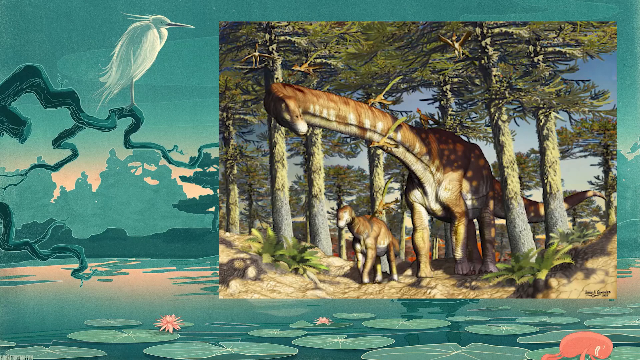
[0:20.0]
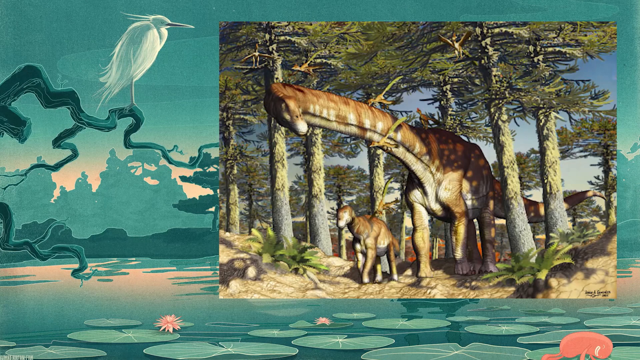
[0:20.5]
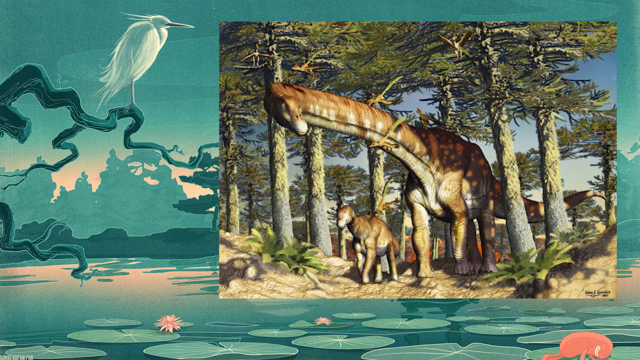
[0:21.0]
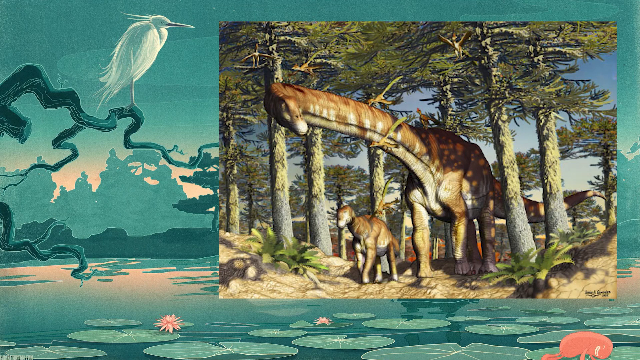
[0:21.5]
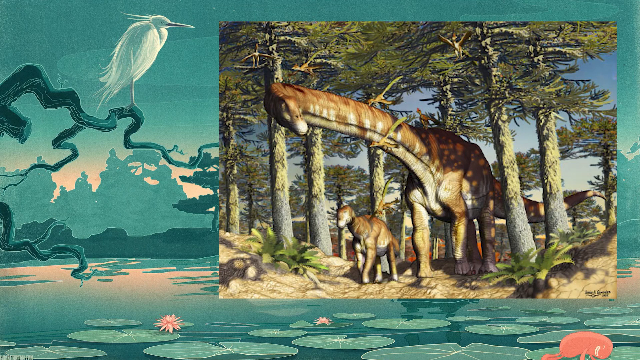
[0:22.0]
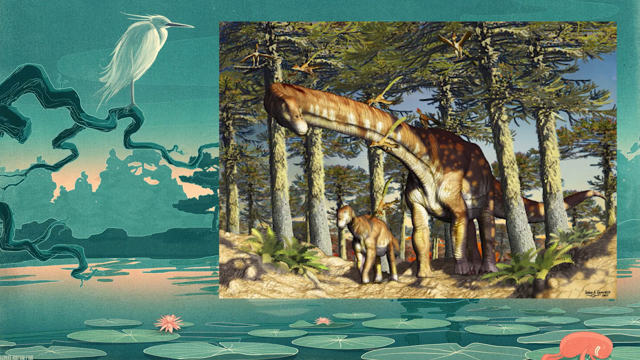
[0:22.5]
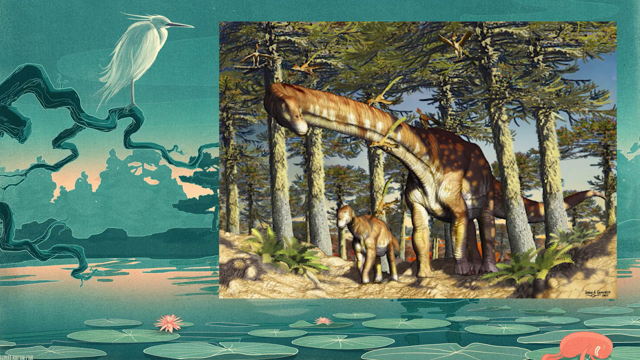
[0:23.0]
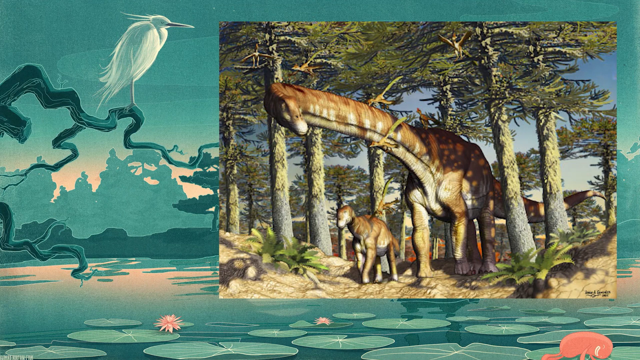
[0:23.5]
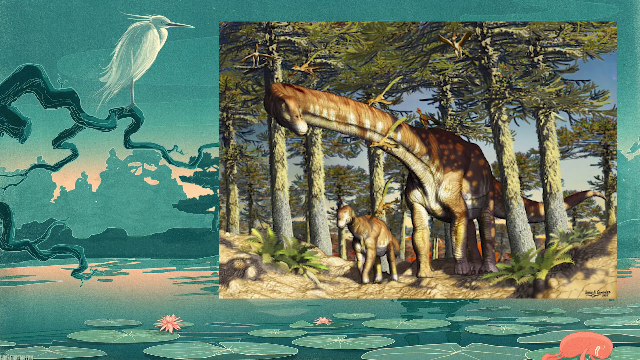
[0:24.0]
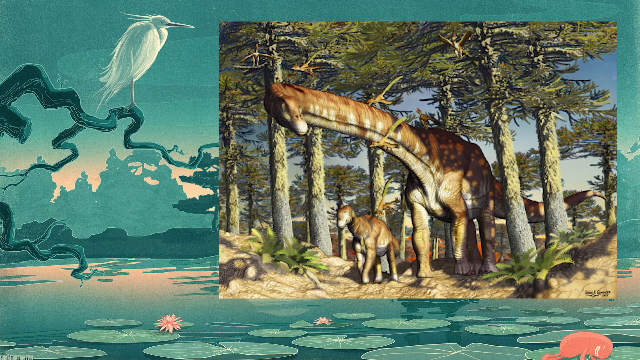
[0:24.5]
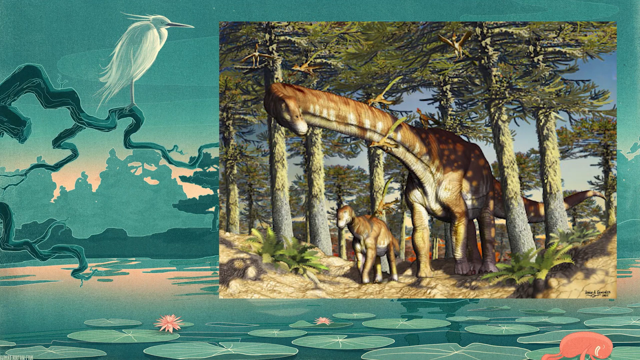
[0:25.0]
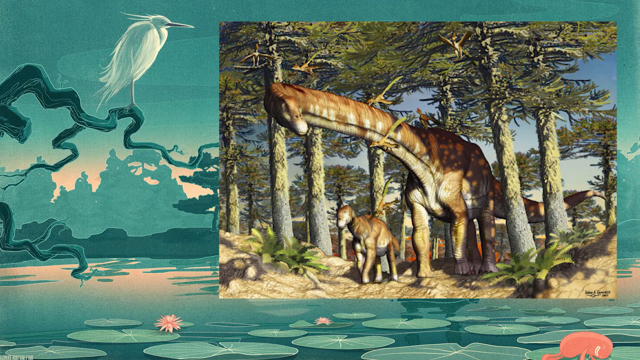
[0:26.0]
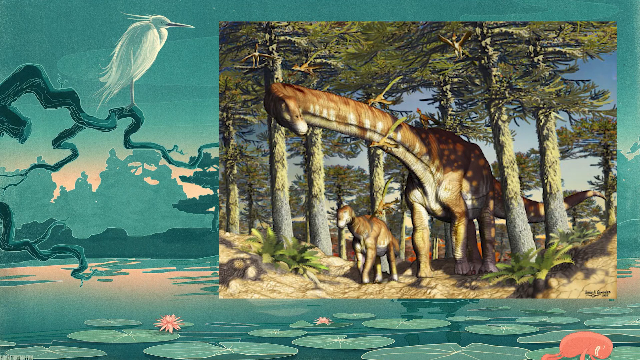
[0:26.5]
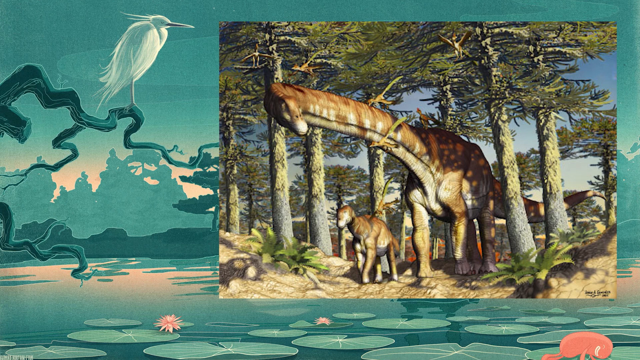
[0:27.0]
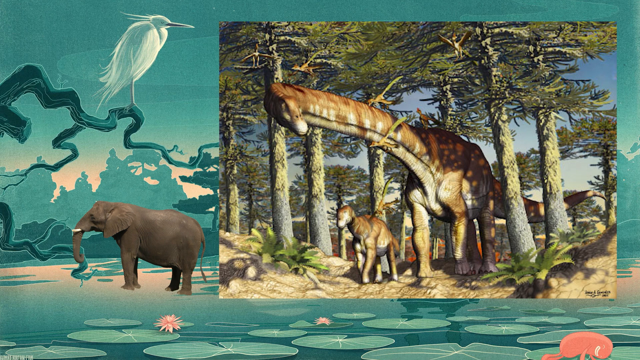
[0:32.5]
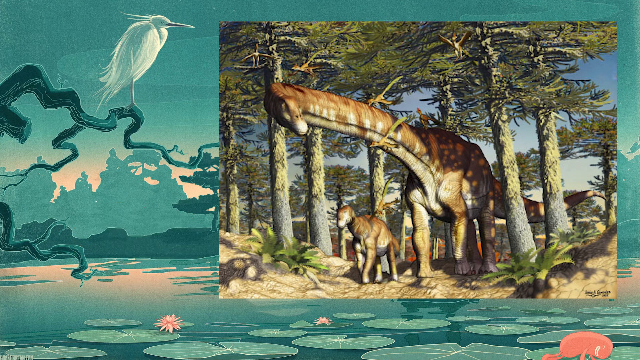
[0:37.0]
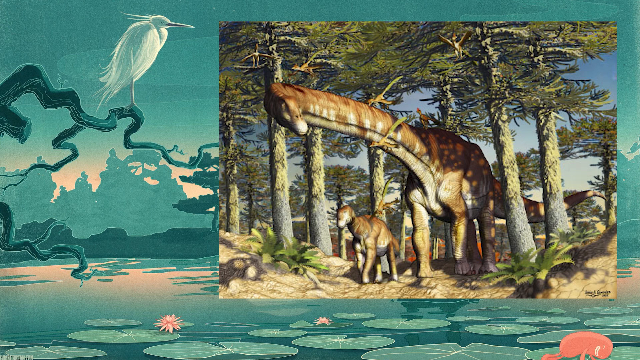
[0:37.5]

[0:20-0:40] The same background appears, with the Japanese building in the distance and Japanese trees around it, taken from the perspective of almost a lily pad on the lake in the foreground. On the left side there is a bird perched on a tree branch. An image is overlaid on top of the background showing a couple of dinosaurs walking through the woods: a Brontosaurus and a little baby dinosaur to the right of it, walking through a forest with about six or eight trees in the picture. For a couple of seconds, an image of an elephant appears on the left side, underneath the bird perched on the tree branch.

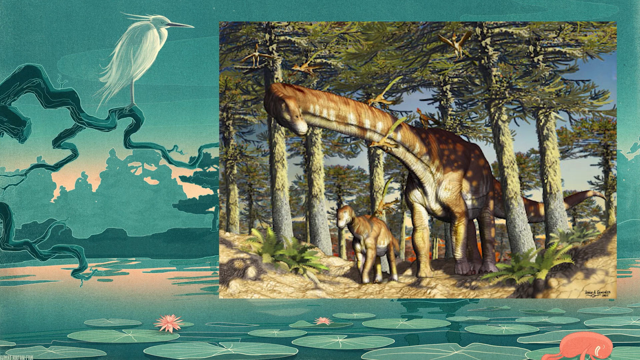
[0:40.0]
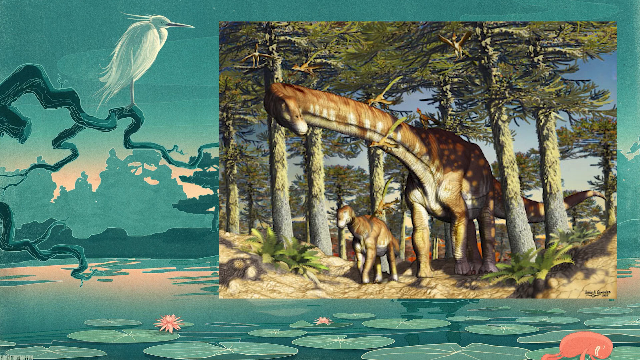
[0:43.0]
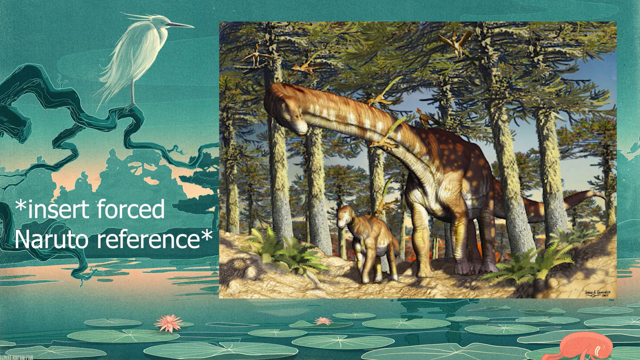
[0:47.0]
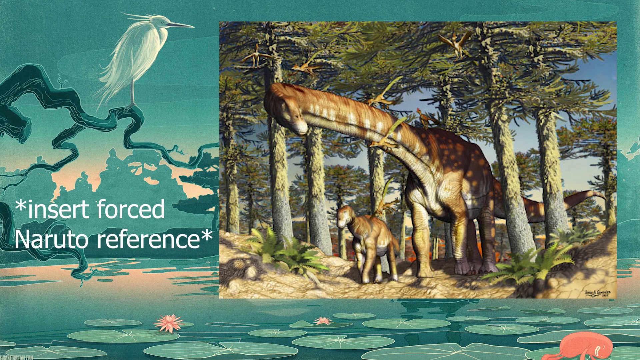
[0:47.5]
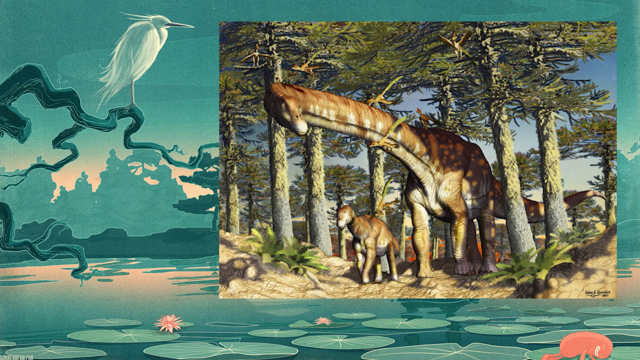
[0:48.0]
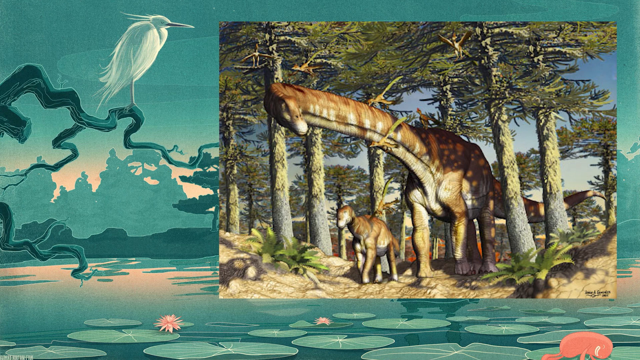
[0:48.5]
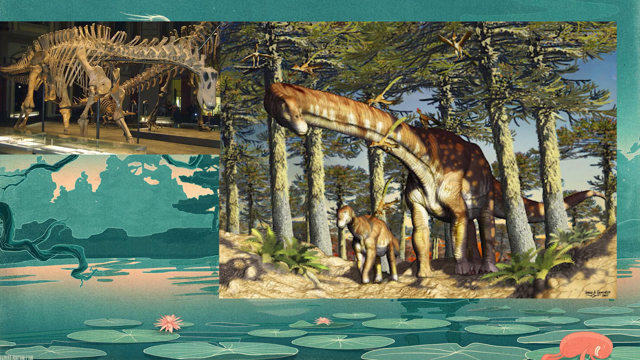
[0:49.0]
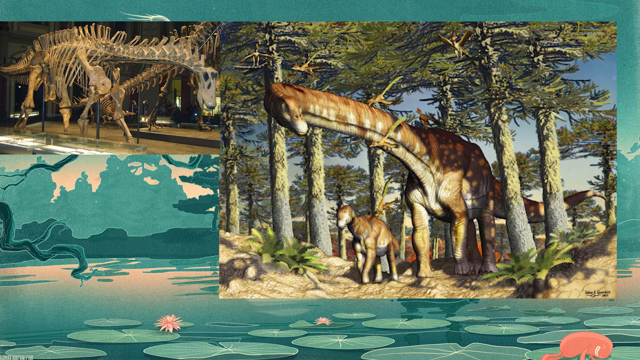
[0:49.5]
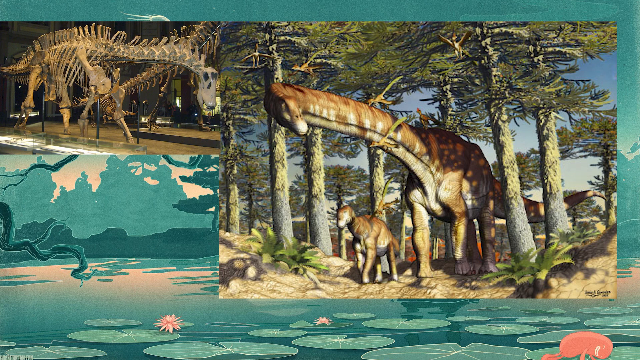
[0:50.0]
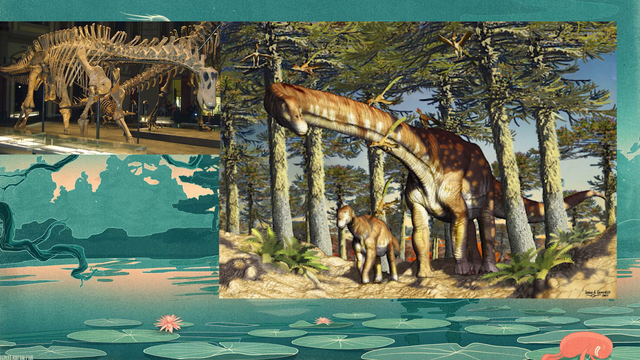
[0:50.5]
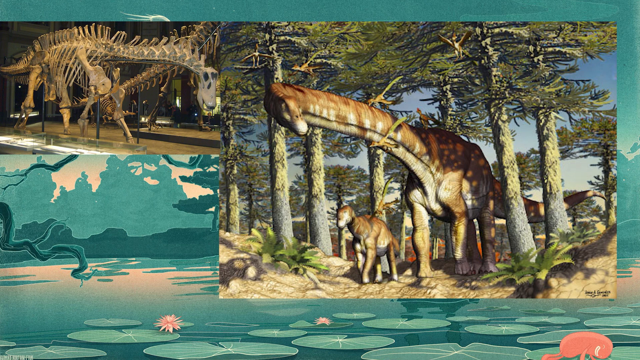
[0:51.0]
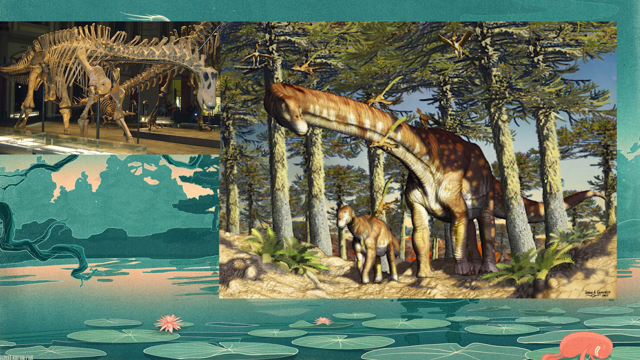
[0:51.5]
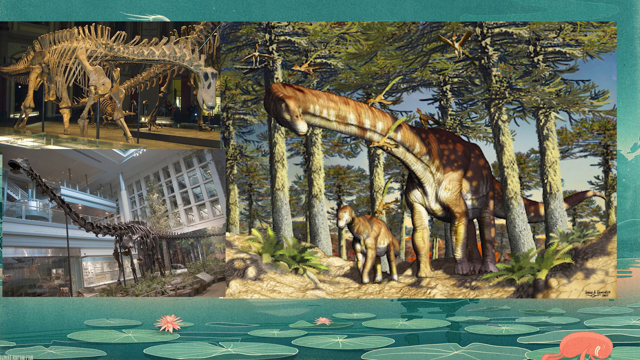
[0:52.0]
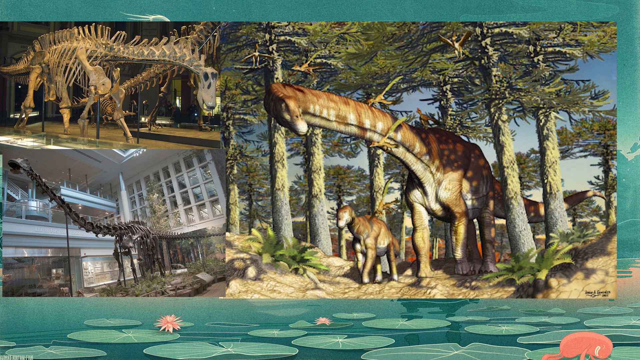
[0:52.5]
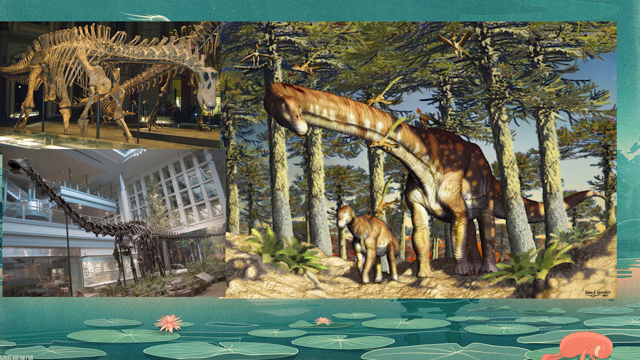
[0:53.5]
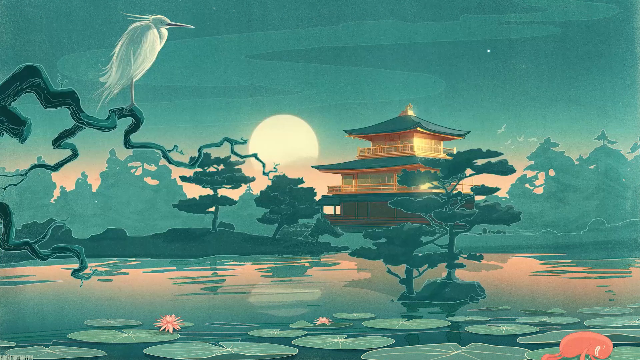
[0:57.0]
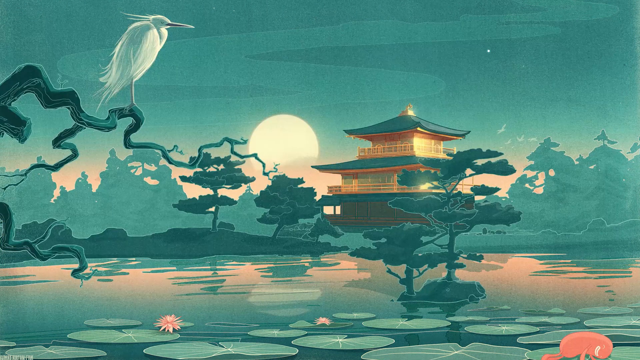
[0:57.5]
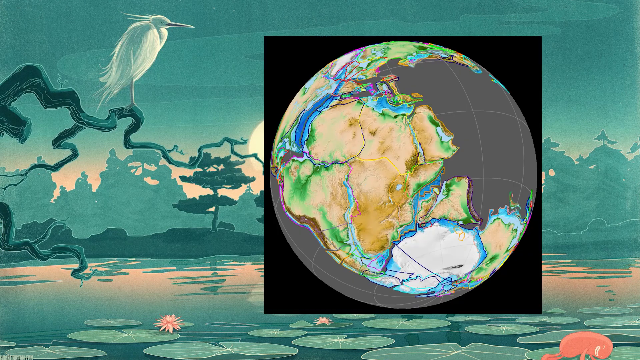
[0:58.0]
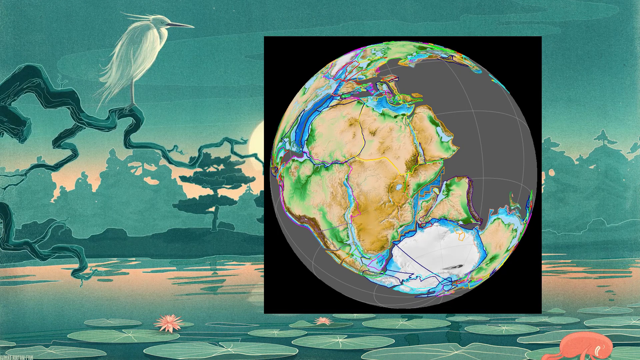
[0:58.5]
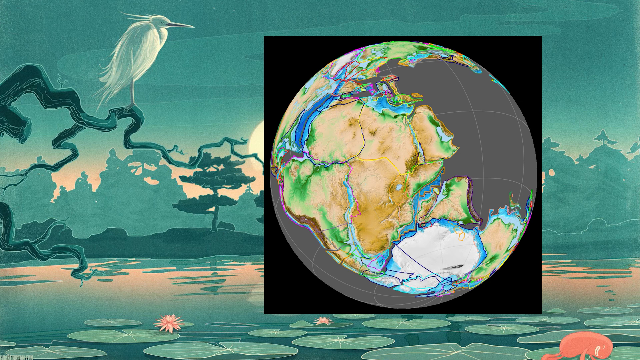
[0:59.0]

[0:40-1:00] The Japanese background is shown from the perspective of a lily pad on a lake in the foreground, with about 12 or 13 lily pads with little Japanese flowers on them. In the background there is a large Japanese building with square rooftops that trickle down to show multiple rooftops, with Japanese-looking trees on its left and right sides. In the foreground, there is a tree to the left with a large white bird with a large beak perched on the branch. Over top of the background is an image of a brontosaurus walking through a forest with a little baby brontosaurus walking to the right of it. A couple of seconds in, text appears on the left-hand side, below the bird and beside the picture of the brontosaurus, that says "insert forced naruto reference." An image of a dinosaur fossil exhibit at a museum then appears on the top left of the screen, covering the bird, and below the bird there is a large fossil reconstruction of a Brontosaurus in a museum.